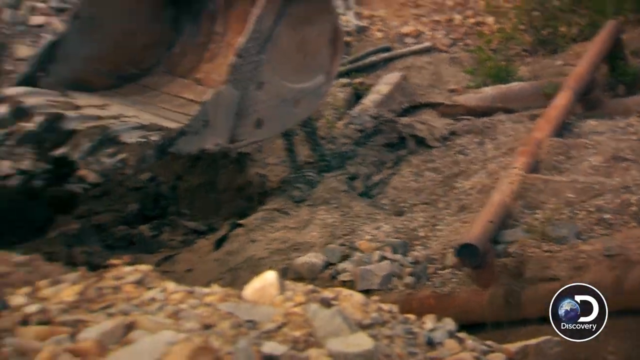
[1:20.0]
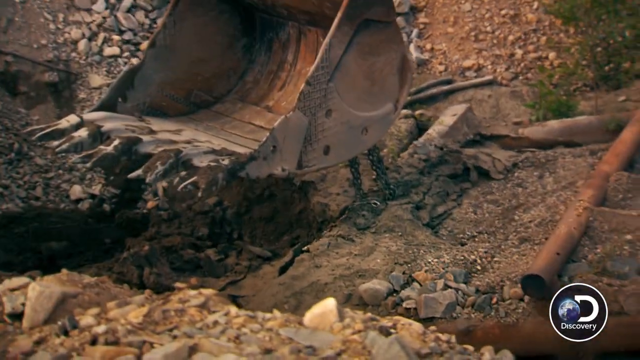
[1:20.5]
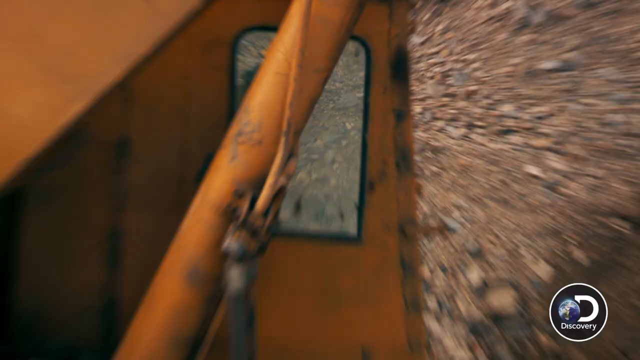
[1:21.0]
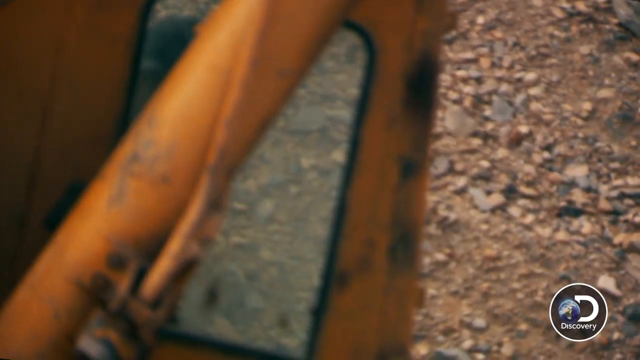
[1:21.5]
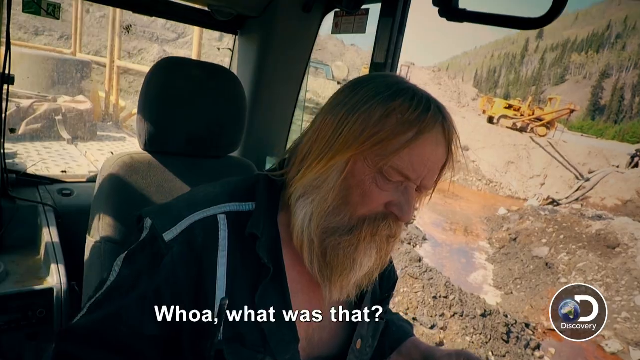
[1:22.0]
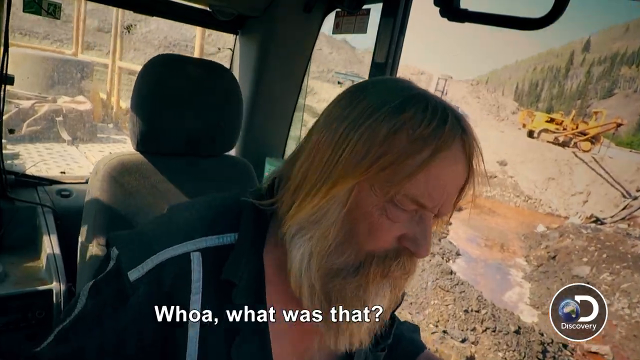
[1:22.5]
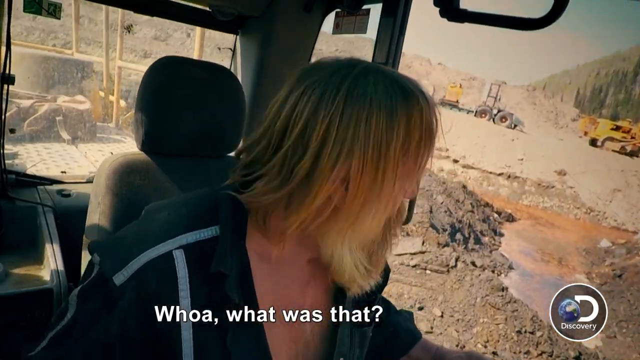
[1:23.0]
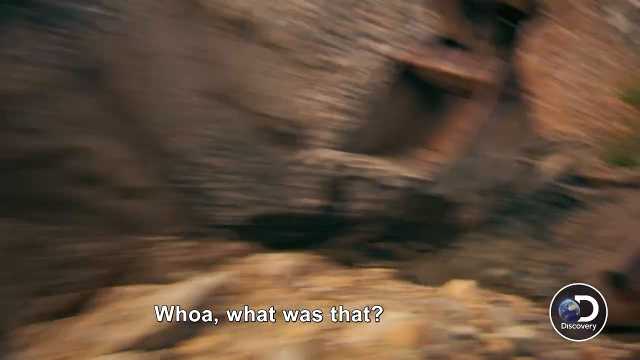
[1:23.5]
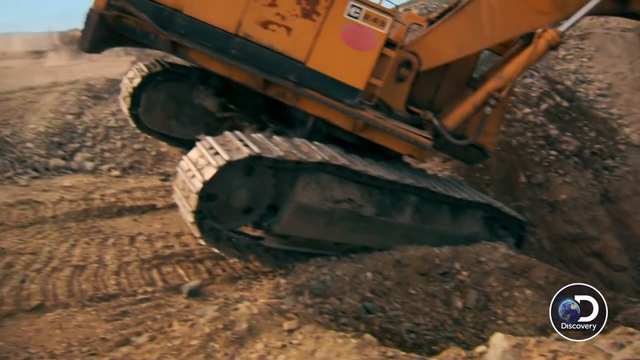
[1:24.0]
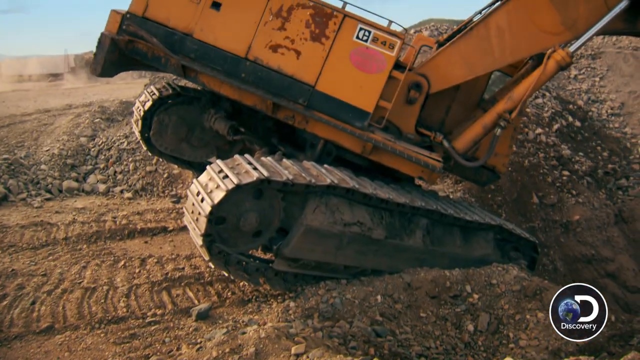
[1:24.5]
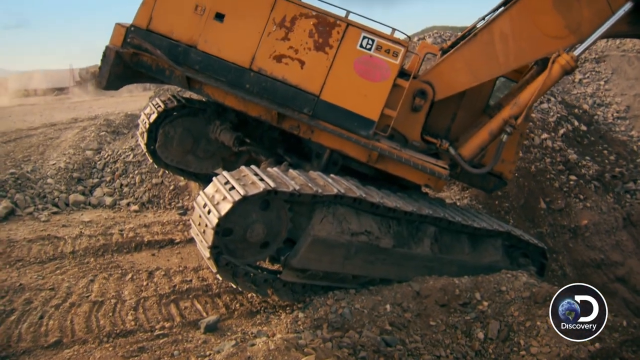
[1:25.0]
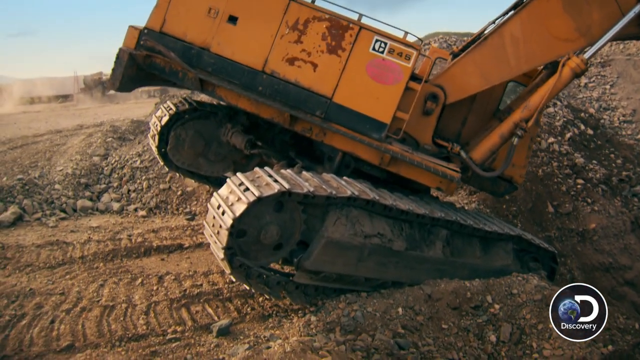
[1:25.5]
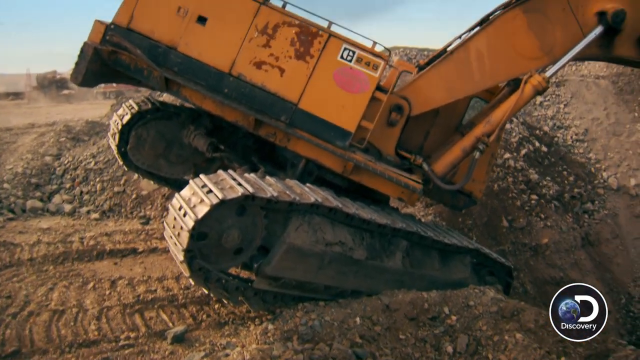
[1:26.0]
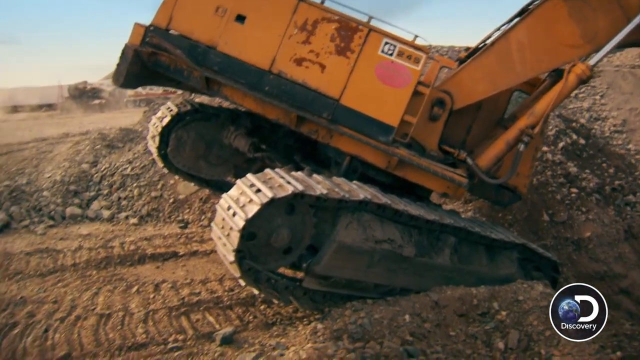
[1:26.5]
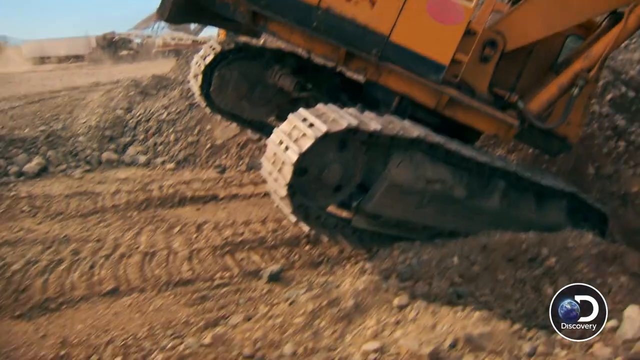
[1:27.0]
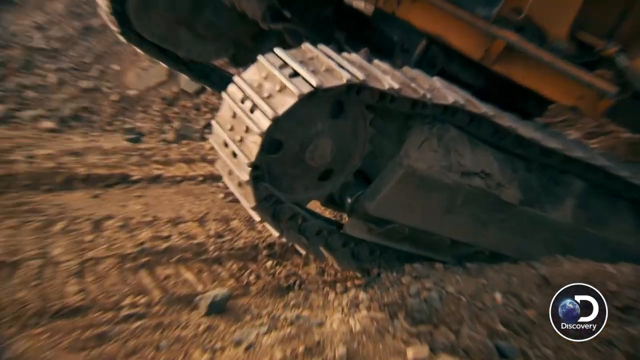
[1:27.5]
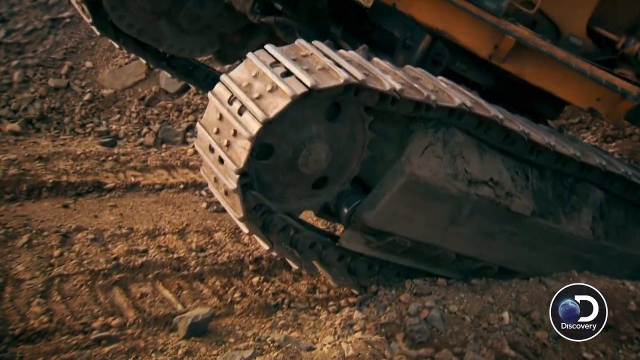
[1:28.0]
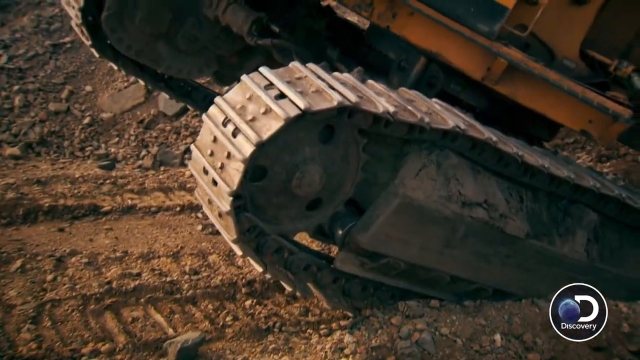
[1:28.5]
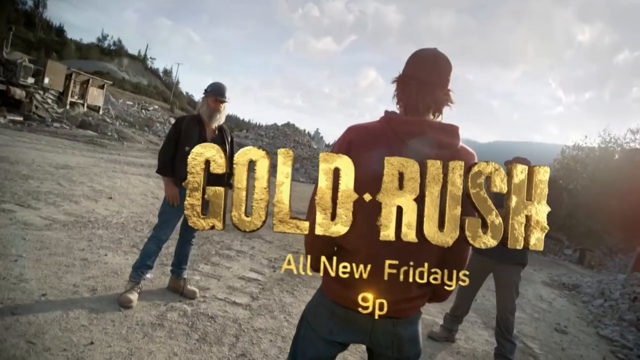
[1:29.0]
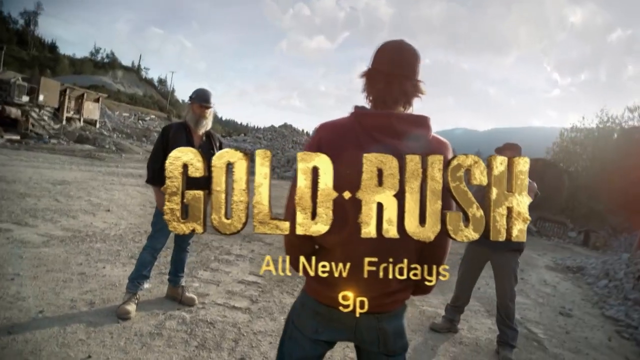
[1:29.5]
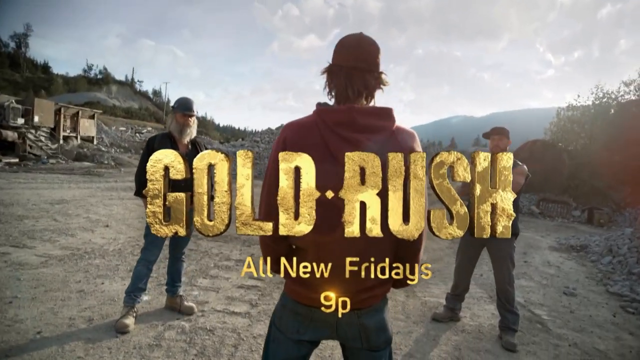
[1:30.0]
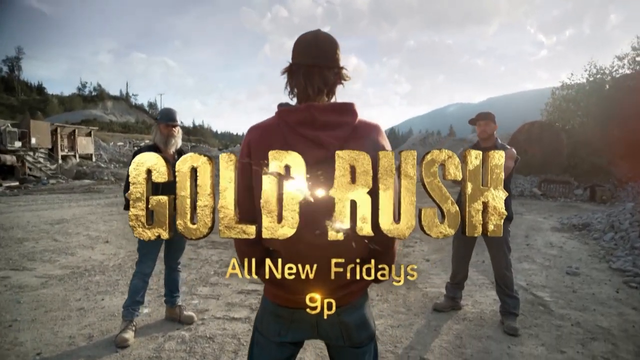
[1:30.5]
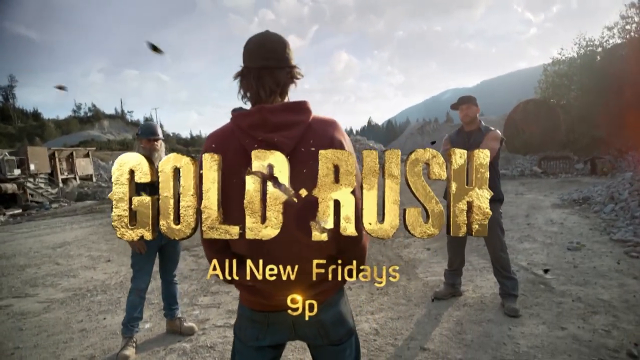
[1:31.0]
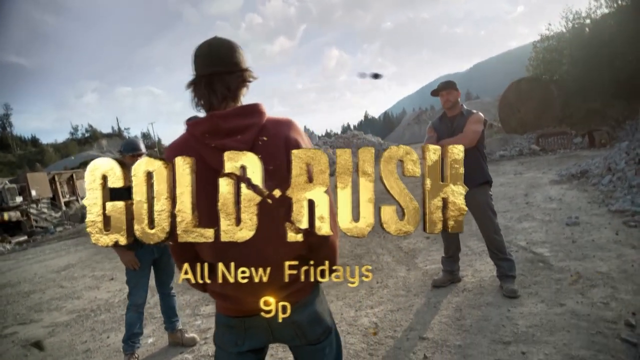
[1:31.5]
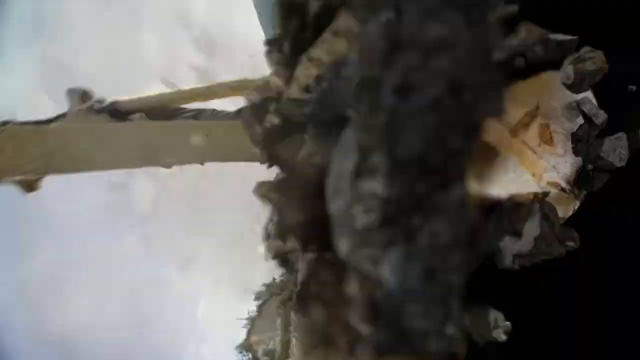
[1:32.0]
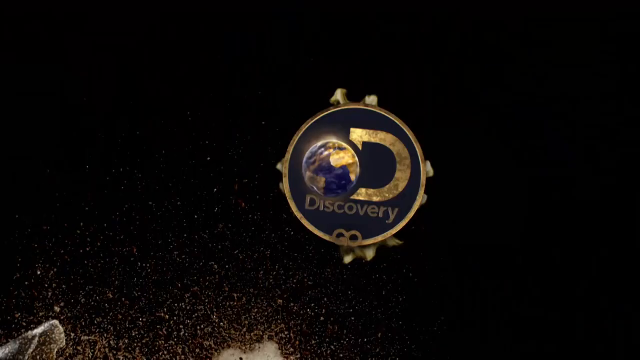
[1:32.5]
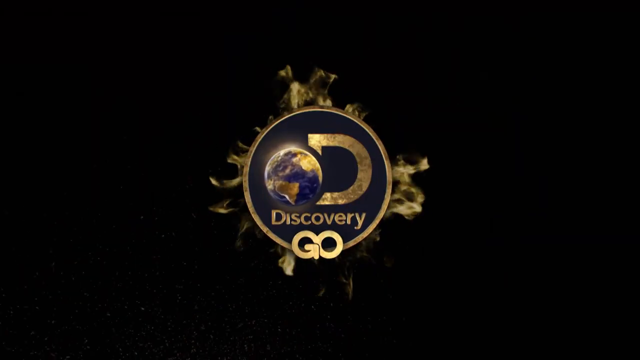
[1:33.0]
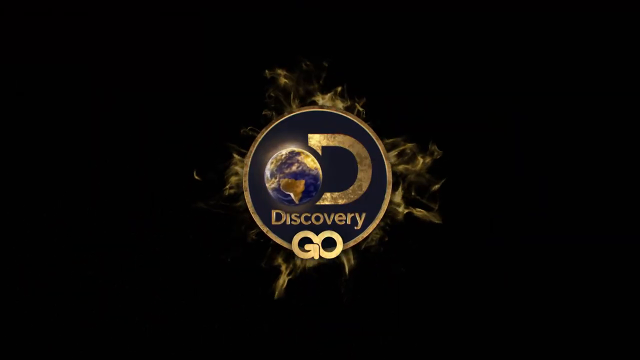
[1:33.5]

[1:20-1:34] A close-up shows the crane's scoop attempting to move something. The view zooms out to the side of the orange vehicle, then back to the interior, where the man is still struggling a bit, then out to the crane and back to the vehicle. The vehicle looks like it is starting to slide down into a hole, and it slides a bit more. The scene then switches to an ad for the show: "Gold Rush" appears in the same font as at the very beginning, looking like melted gold, along with "All new Fridays 9 p.m." Three men with hats stand in kind of a triangle in a barren landscape, presumably a mining operation, as the camera angle shifts from left to right. What appear to be stylized pieces of dirt fly toward the viewer, imitating dirt being sorted. As the camera starts turning, the words "Gold Rush" start to crack, and a large piece of equipment is slammed down into the dirt. The camera makes kind of a 180-degree turn and flips up to a black screen with a gold logo: a circle with "GO" at the bottom, a giant D in the middle, the word "Discovery" underneath it, and a picture of a globe in the very center. Things coming out from the edges of the circle look possibly like flames.